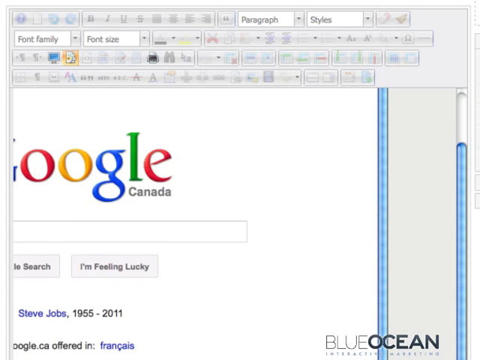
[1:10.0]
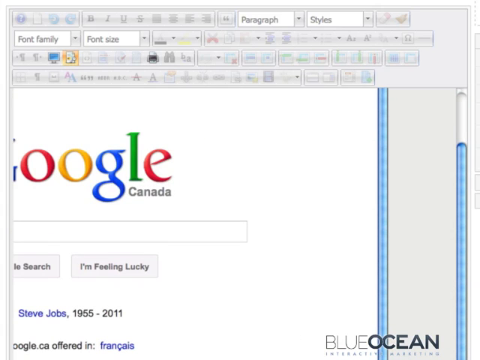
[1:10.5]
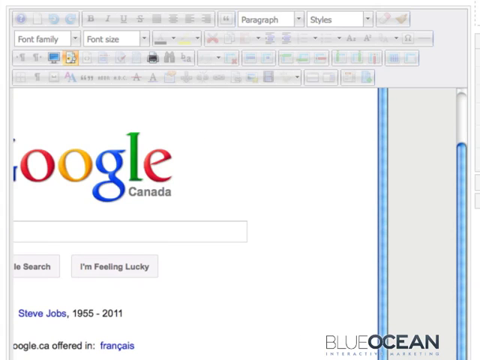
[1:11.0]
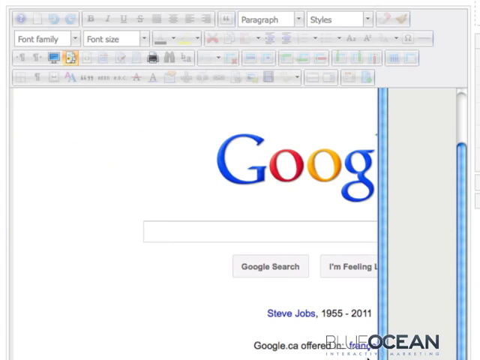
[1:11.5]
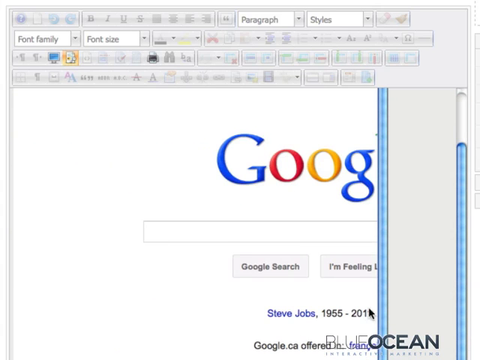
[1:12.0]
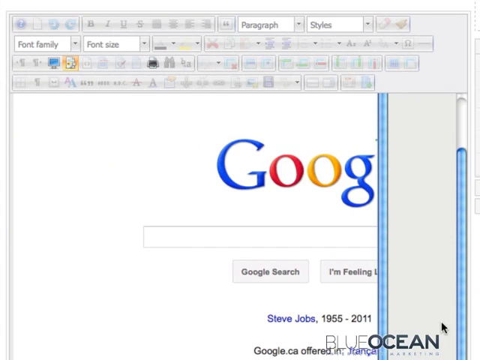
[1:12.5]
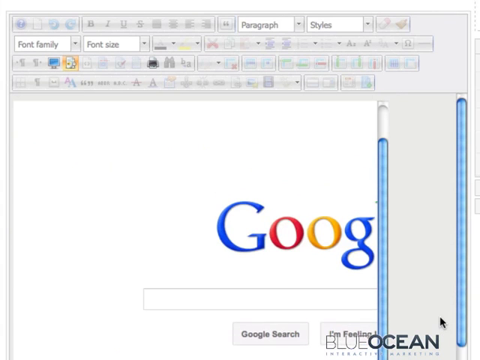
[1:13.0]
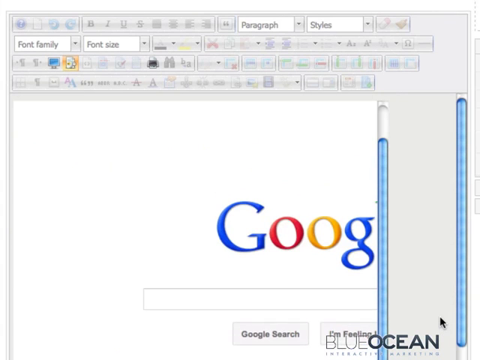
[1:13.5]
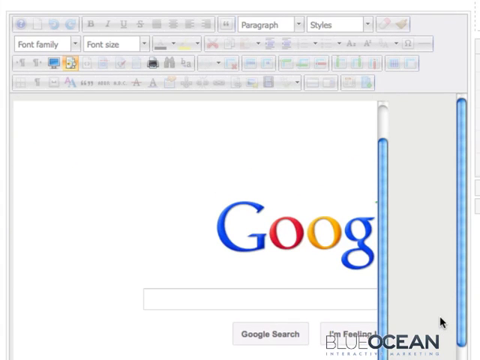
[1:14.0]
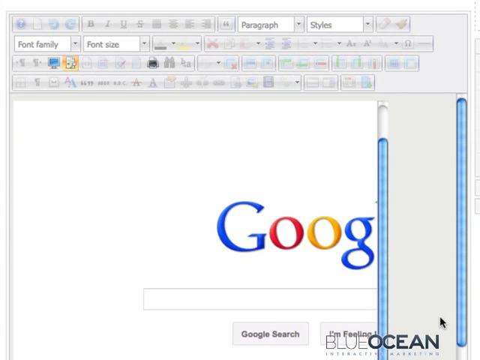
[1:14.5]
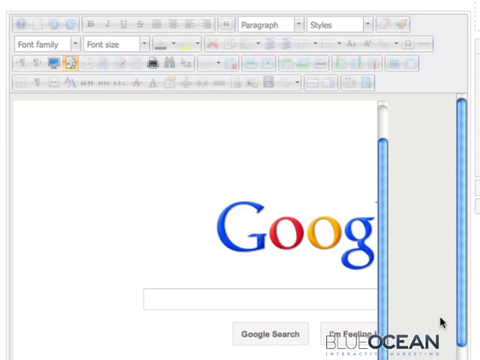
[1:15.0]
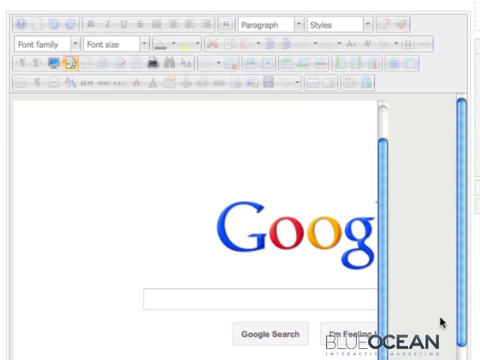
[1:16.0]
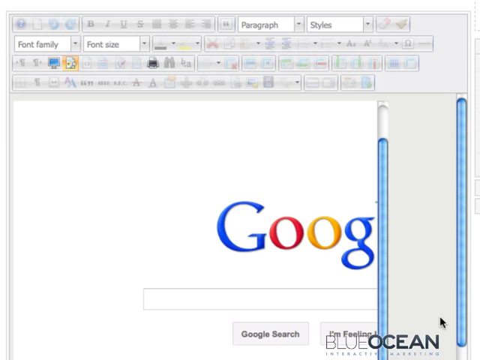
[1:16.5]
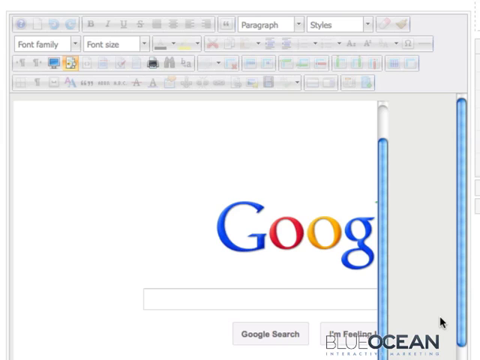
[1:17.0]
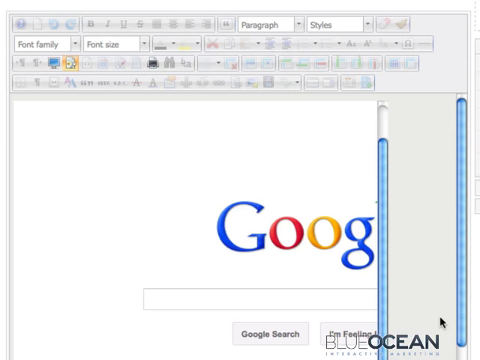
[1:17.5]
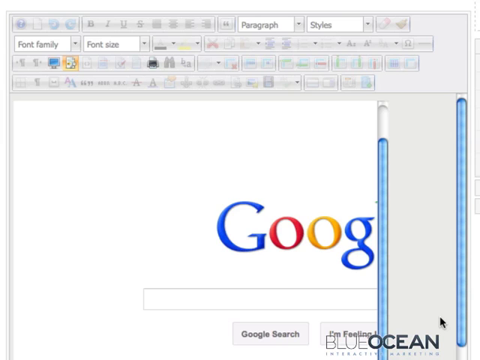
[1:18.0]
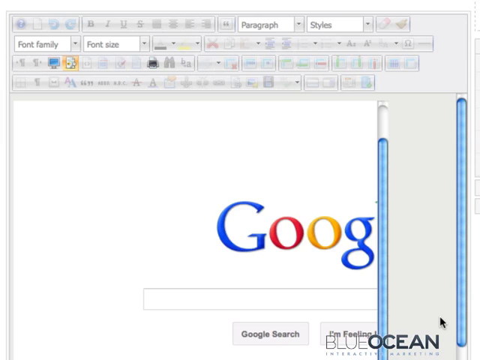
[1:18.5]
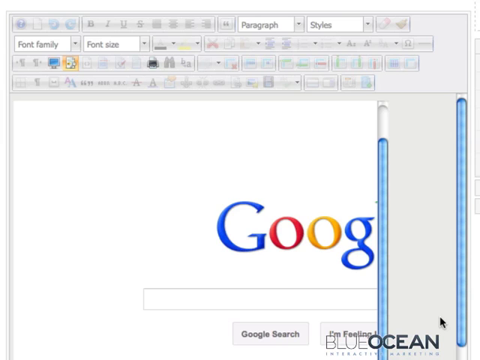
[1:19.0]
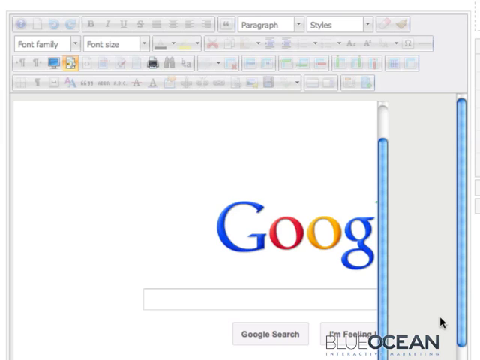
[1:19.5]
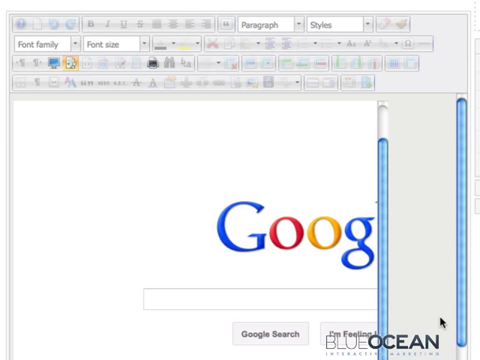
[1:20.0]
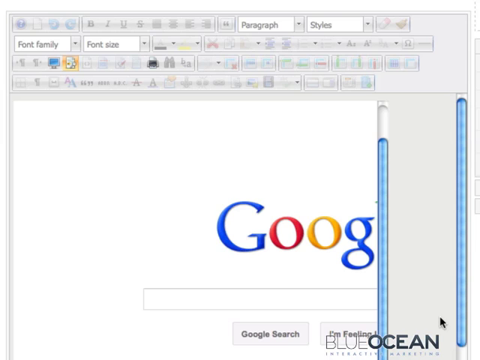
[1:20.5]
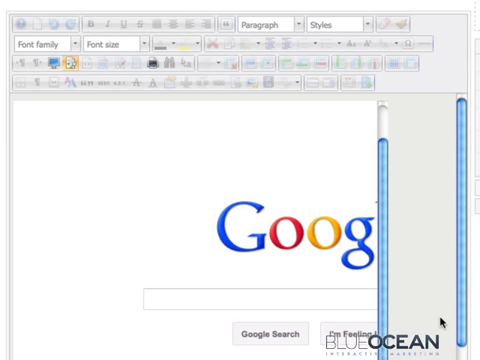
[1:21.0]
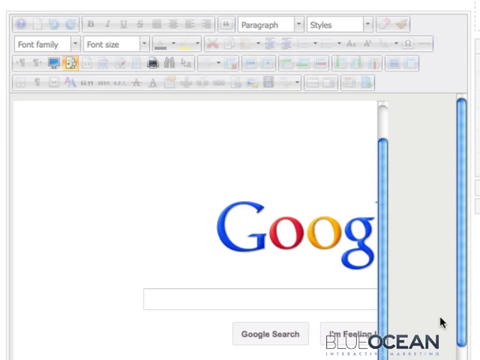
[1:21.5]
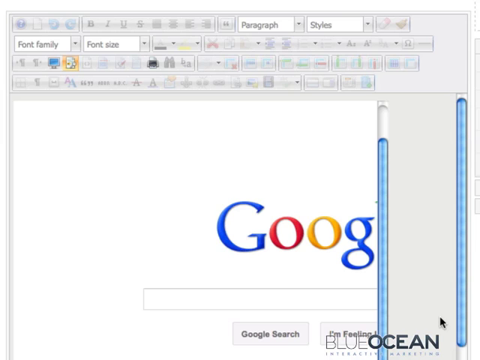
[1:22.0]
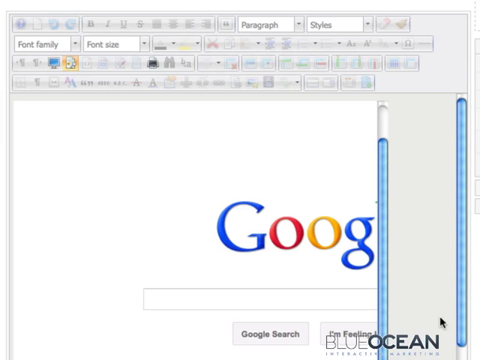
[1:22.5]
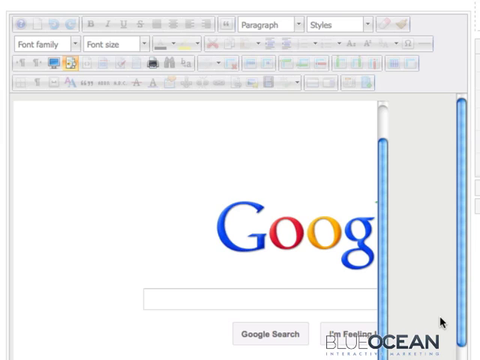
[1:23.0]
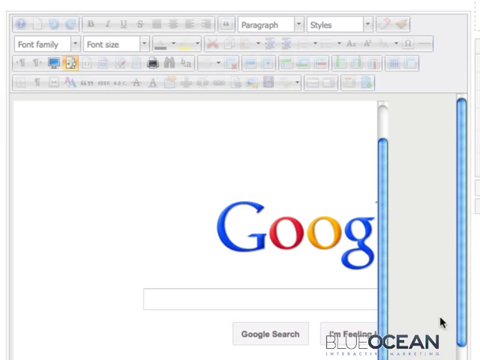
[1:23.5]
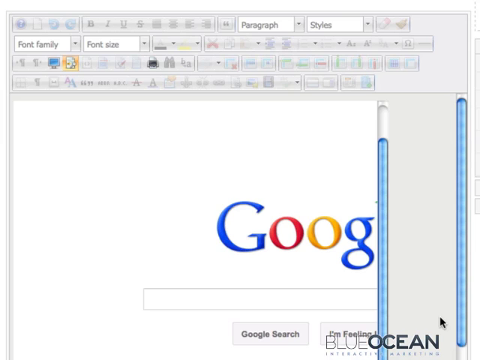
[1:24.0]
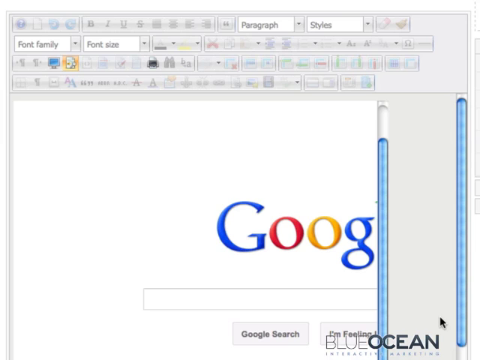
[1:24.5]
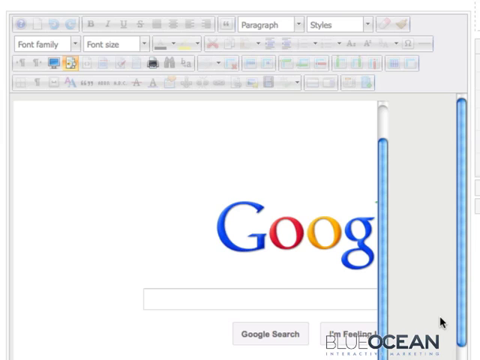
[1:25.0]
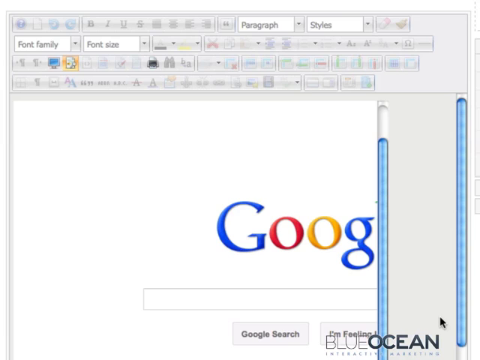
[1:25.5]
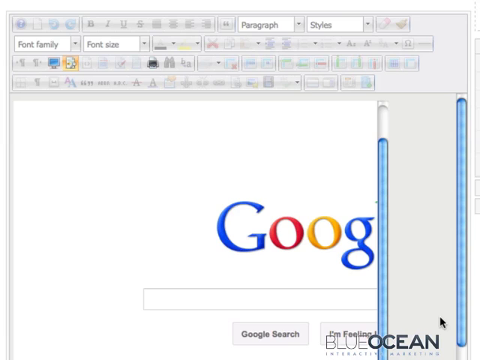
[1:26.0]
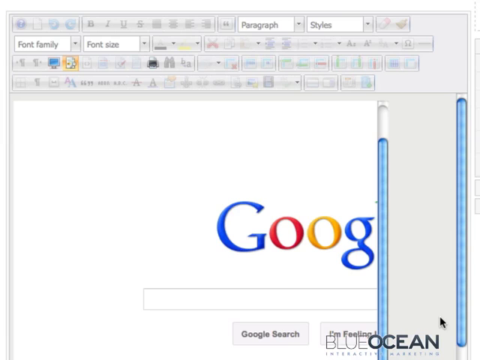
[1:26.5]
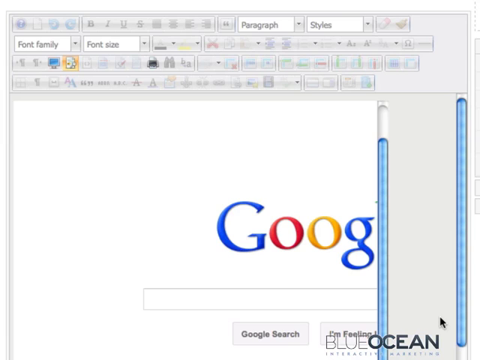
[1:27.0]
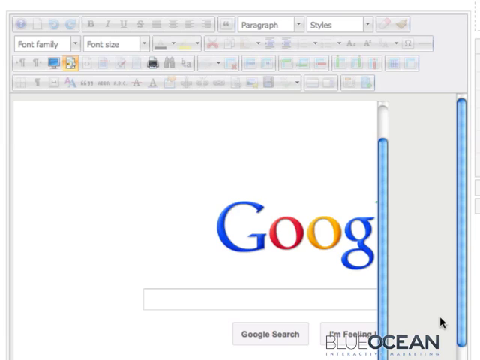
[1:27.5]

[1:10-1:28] Blue Ocean, using iFrames, opens a page, a form that is ready for typing, with styles, paragraph, font size and font family options. Google appears and a page loads. A mouse moves around, clicking all over the page, and a Google page opens within the form, along with a yellow page. The mouse moves up and down, scrolling, and opens the Google Search page, which shows "I'm feeling lucky" and Steve Jobs. The page scrolls up and down while the mouse keeps clicking all over and appears to try to start typing where the style, paragraph, font size and font family options are shown.